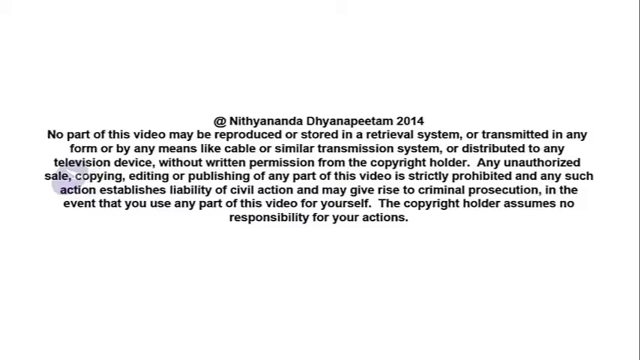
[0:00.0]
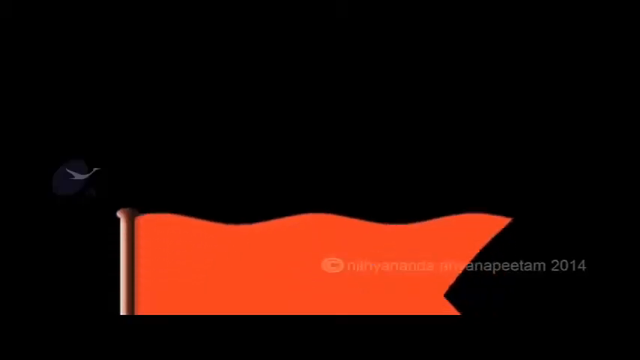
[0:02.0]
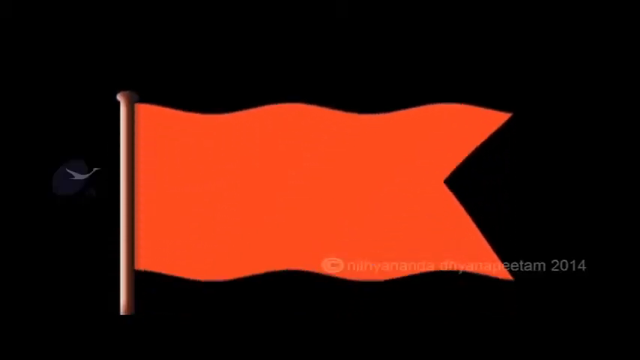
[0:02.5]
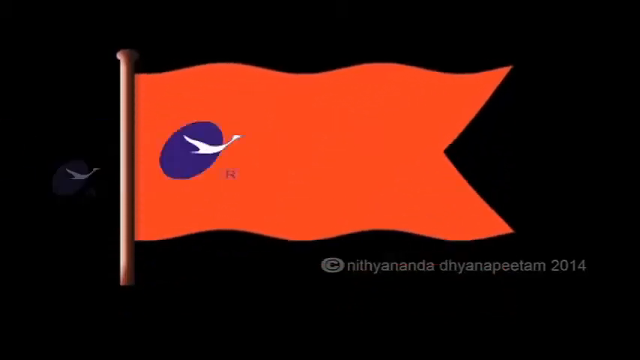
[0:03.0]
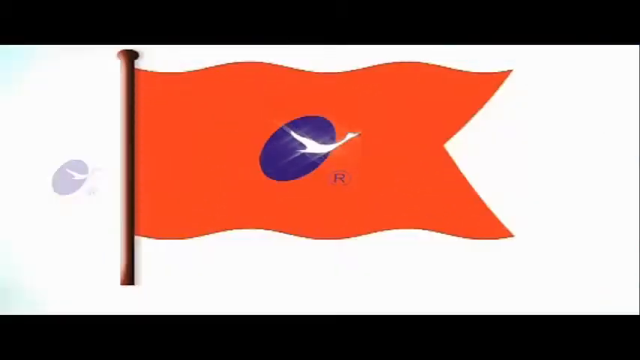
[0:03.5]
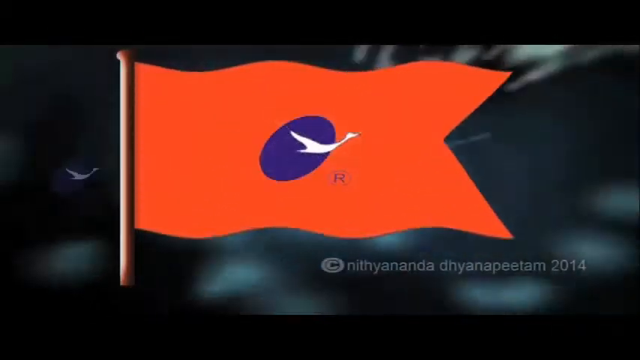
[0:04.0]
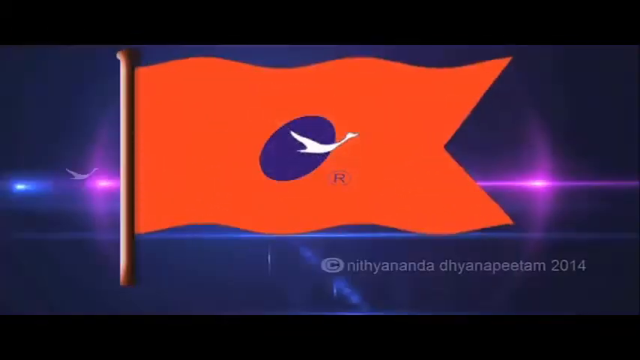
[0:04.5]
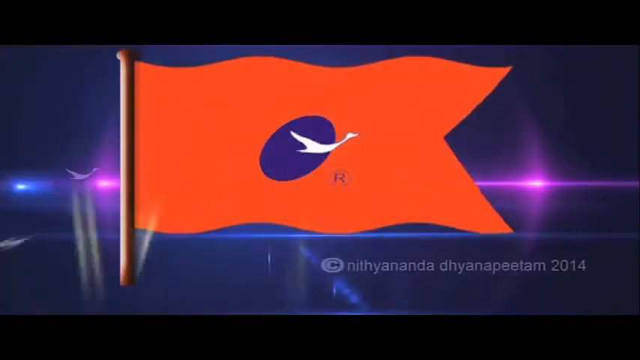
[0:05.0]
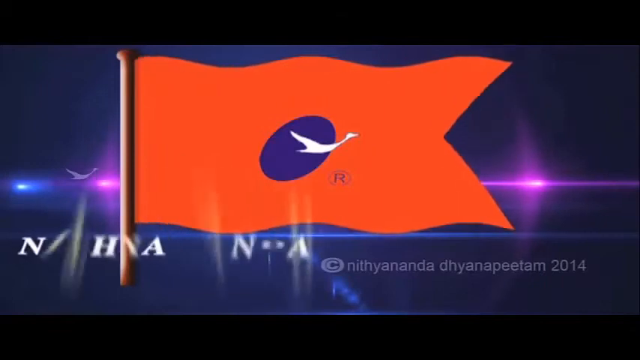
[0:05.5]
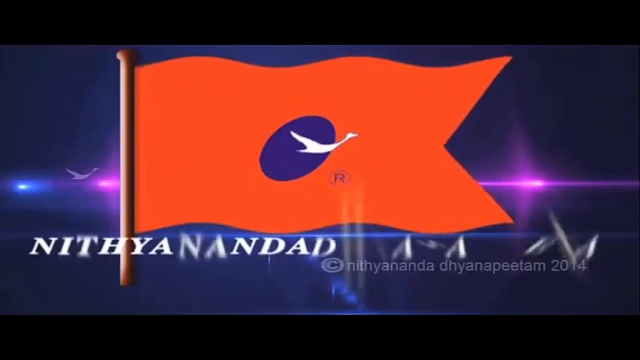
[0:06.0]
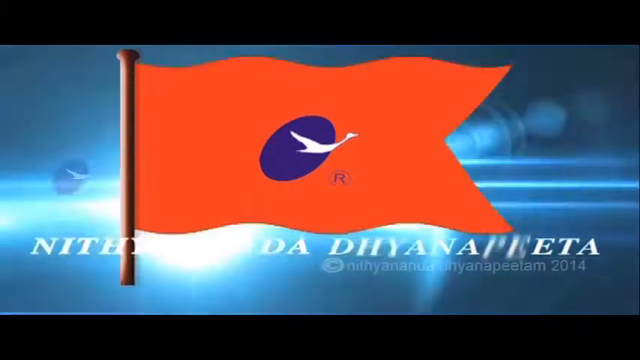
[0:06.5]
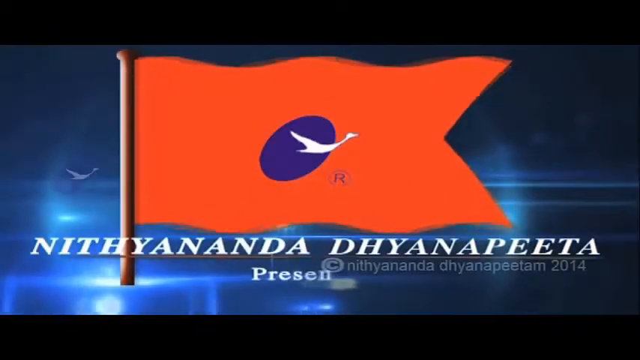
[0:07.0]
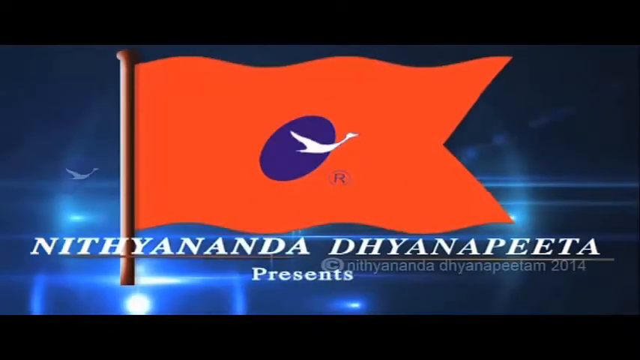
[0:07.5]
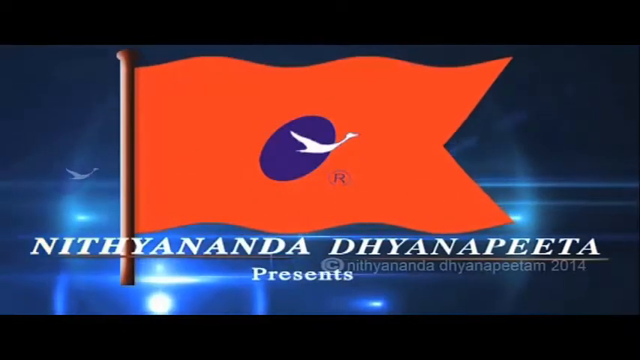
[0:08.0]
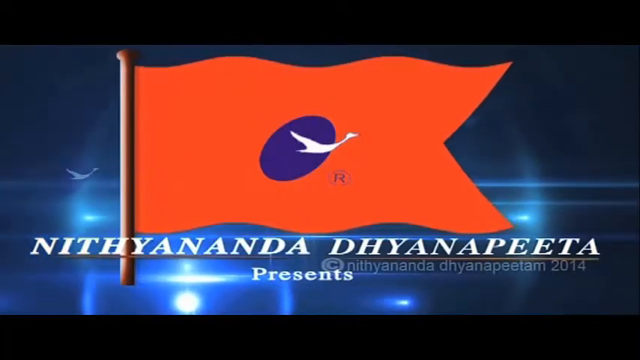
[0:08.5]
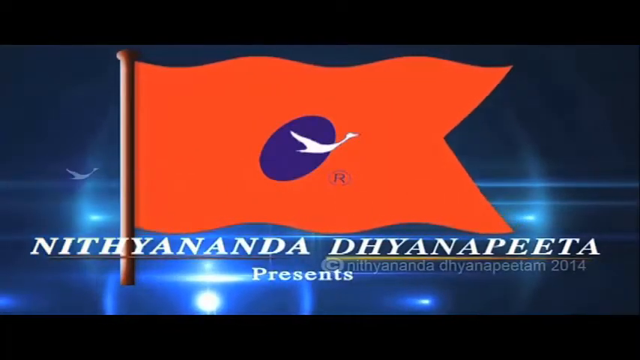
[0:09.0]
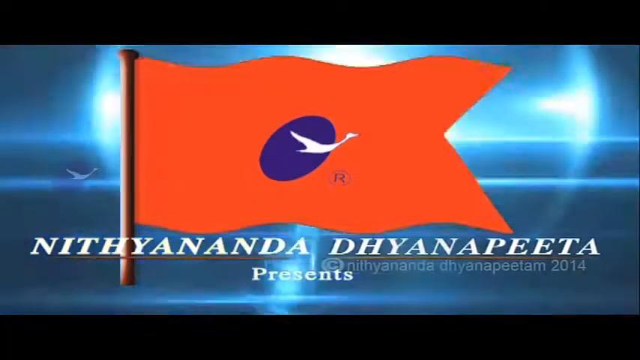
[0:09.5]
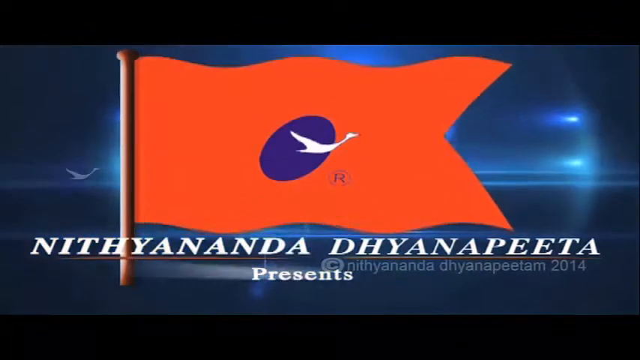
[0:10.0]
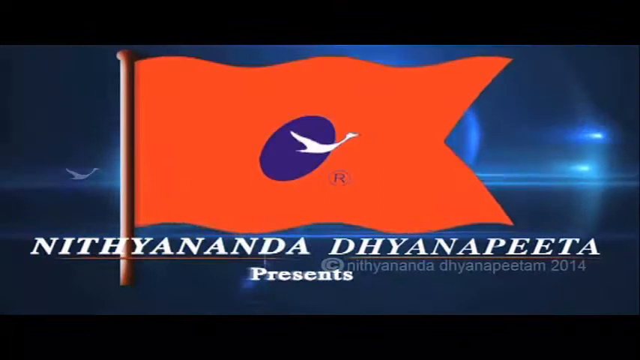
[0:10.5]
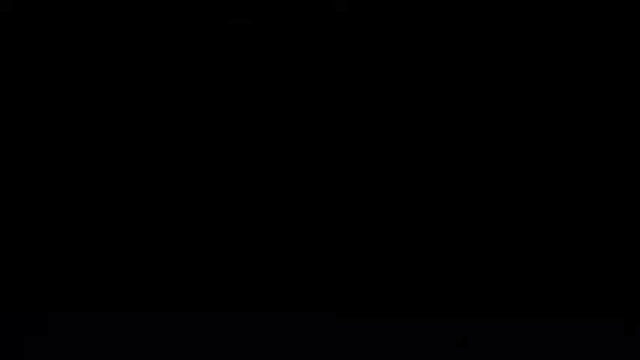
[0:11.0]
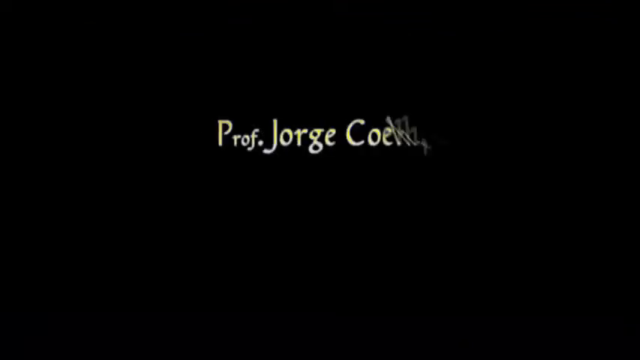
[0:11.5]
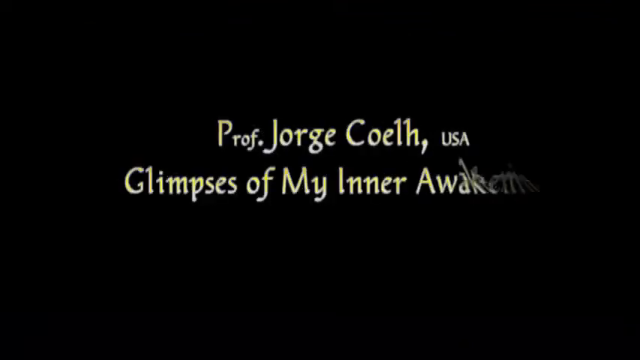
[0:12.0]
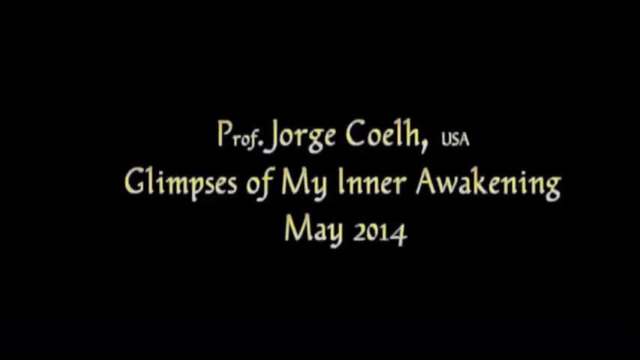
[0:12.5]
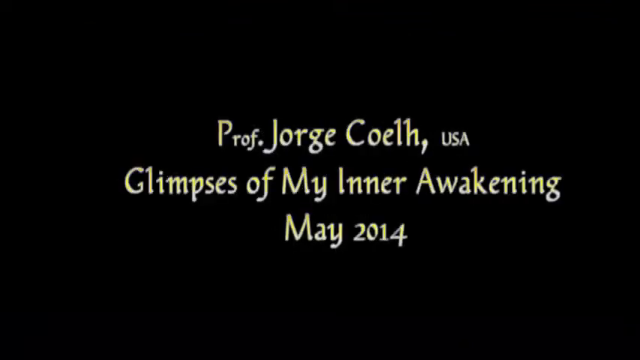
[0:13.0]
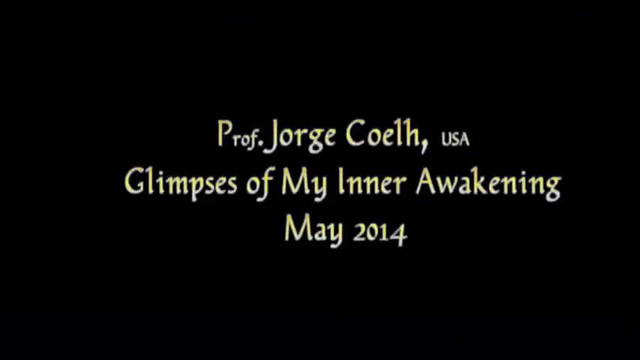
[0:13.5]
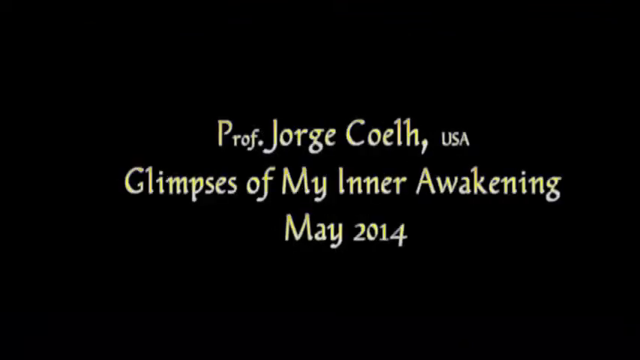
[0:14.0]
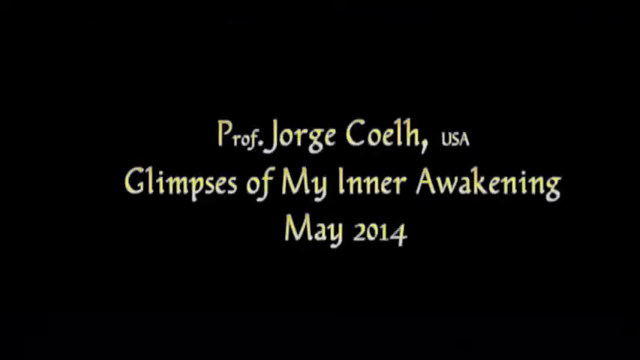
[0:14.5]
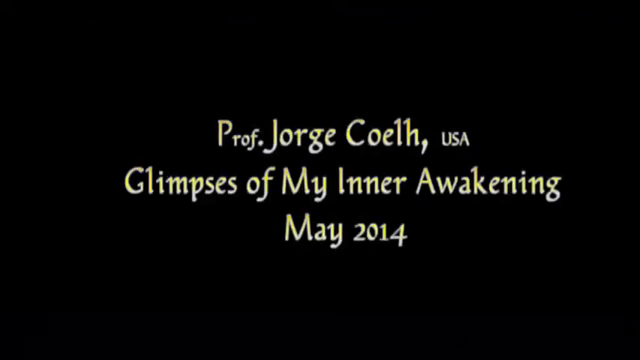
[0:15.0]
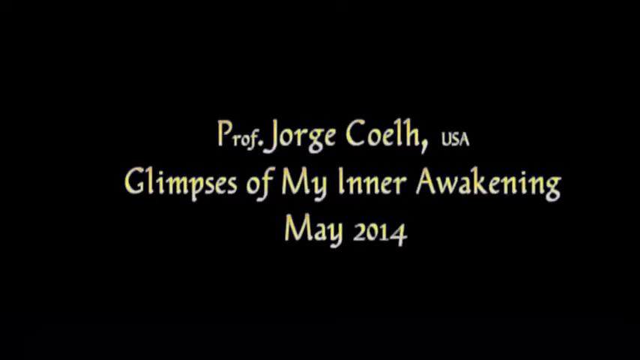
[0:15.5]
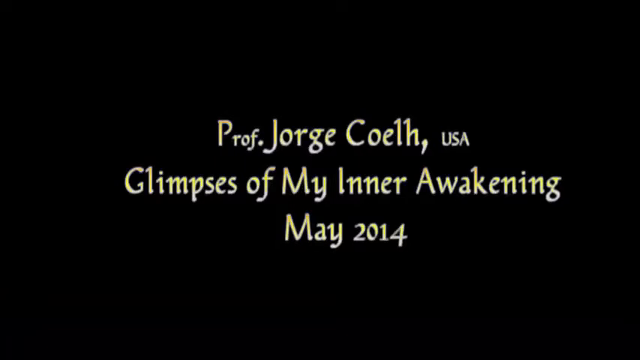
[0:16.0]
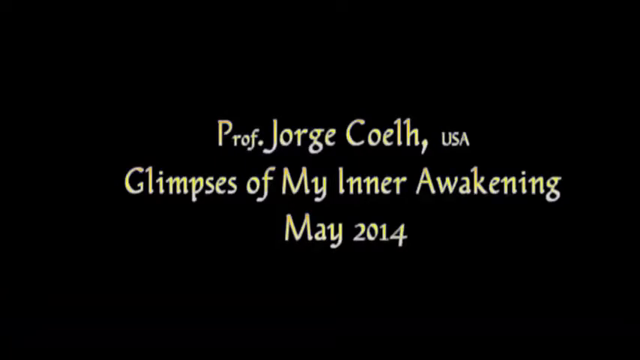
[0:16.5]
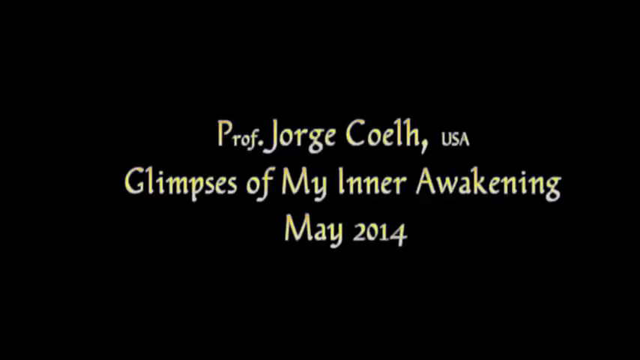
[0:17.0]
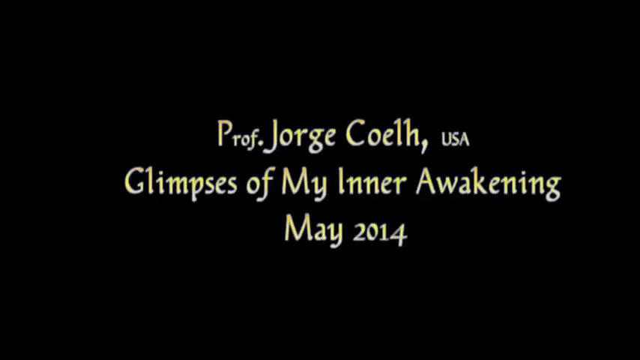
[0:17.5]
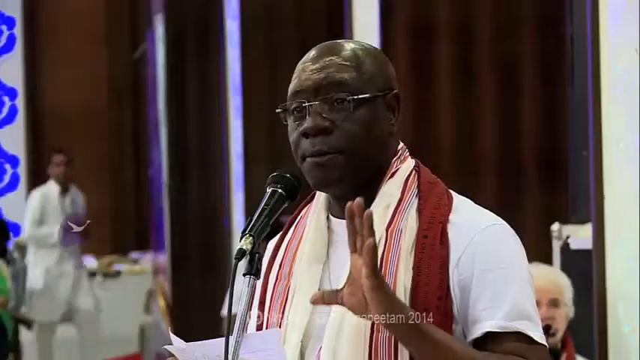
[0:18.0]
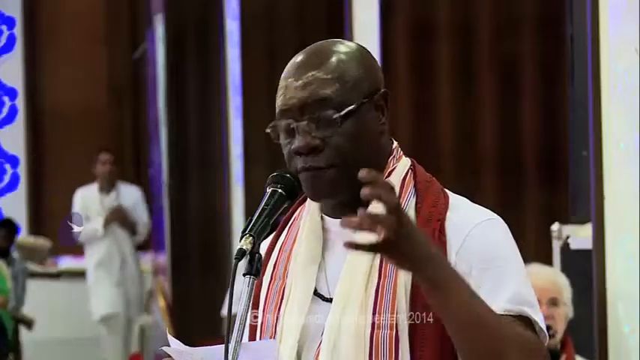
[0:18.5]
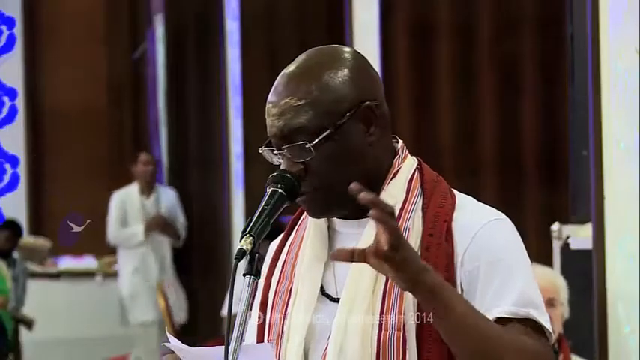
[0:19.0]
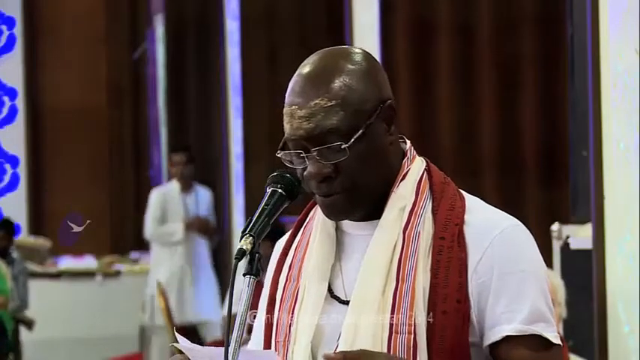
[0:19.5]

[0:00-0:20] A copyright notice appears, reading "Nithyananda Dhyanapitam 2014" and continuing: "no part of this video may be reproduced or stored in a retrieval system or transmitted in any form, by any way, by any means like cable or similar transmission system or distributed to any television device without written permission from the copyright holder. Any unauthorized sale, copying, editing, or publishing of any part of this video is strictly prohibited" and "The copyright holder assumes no responsibility for your actions." Then a gigantic, computer-generated flag pops up on a black background. On it there is something like a swan flying in a blue circle and an R, apparently a copyright mark, and another of these swans is to the left of the flag. Text reads "Nithyananda Dhyanapitam 2014", some lightning appears, and then the text reads "Nithyananda Dhyanapita presents."